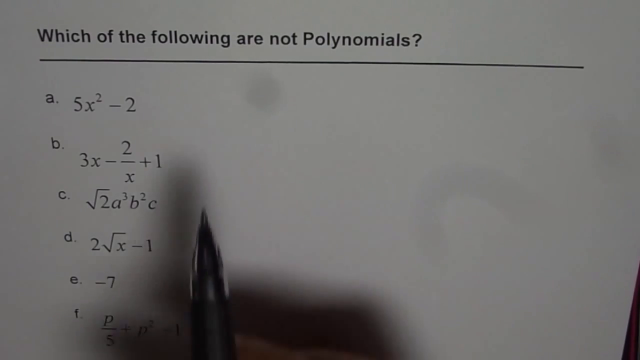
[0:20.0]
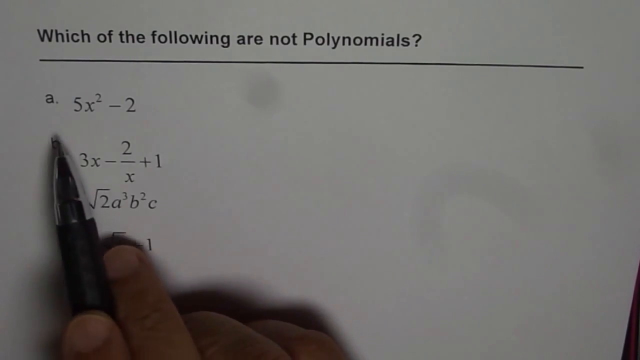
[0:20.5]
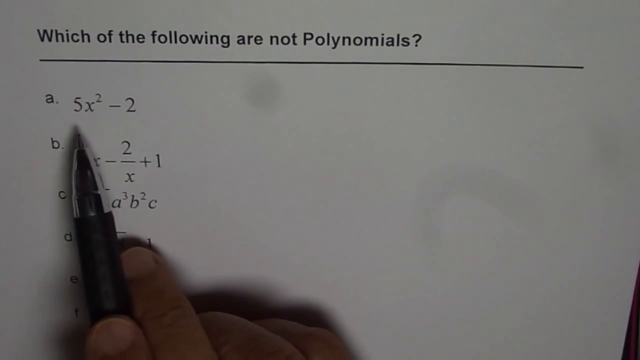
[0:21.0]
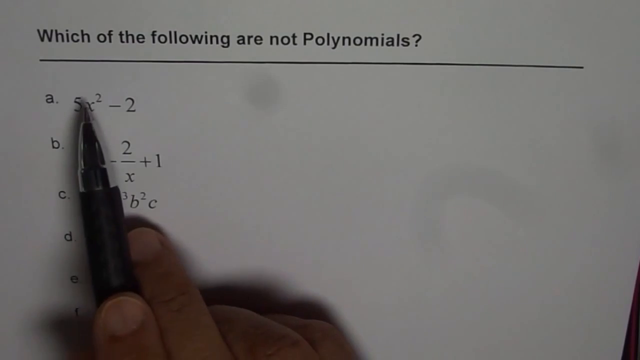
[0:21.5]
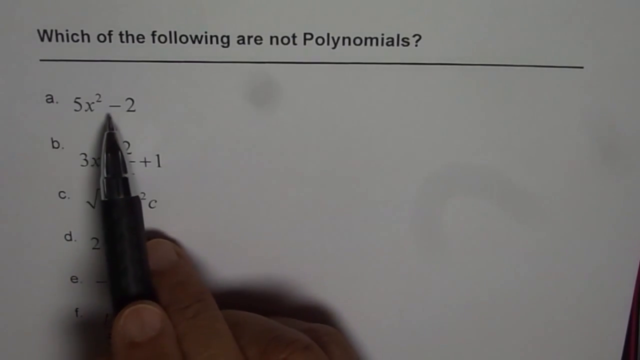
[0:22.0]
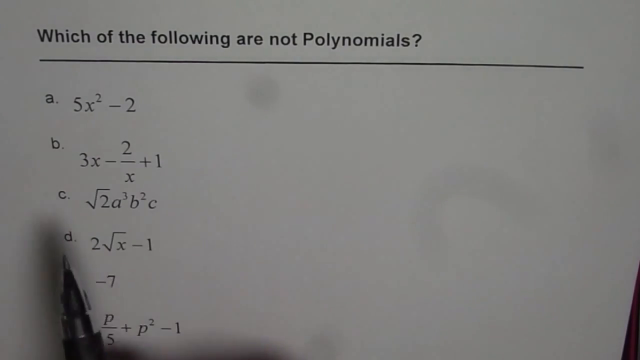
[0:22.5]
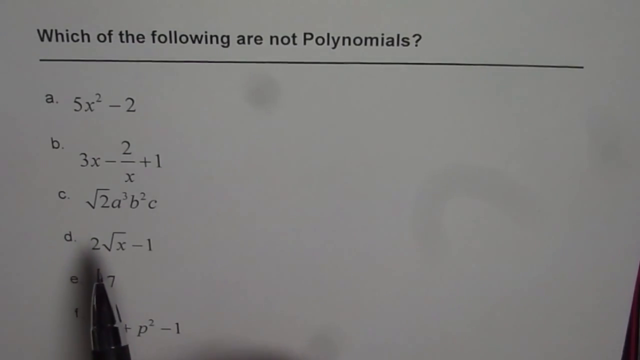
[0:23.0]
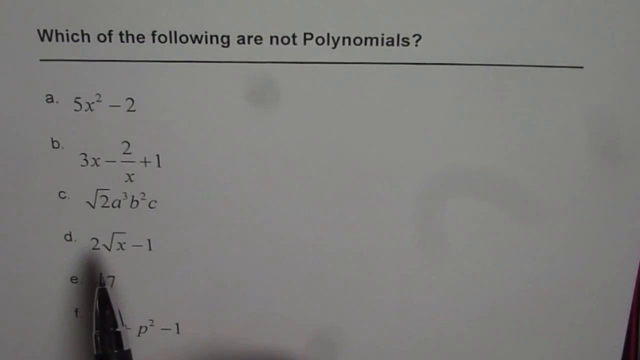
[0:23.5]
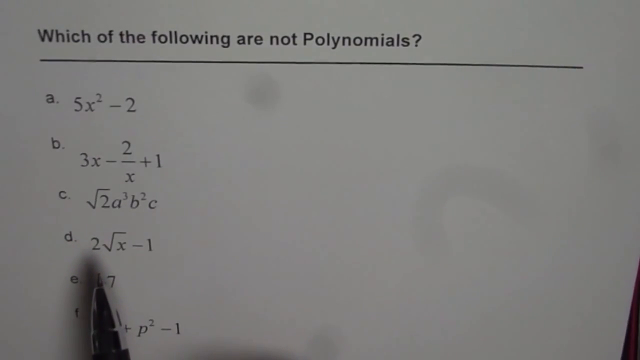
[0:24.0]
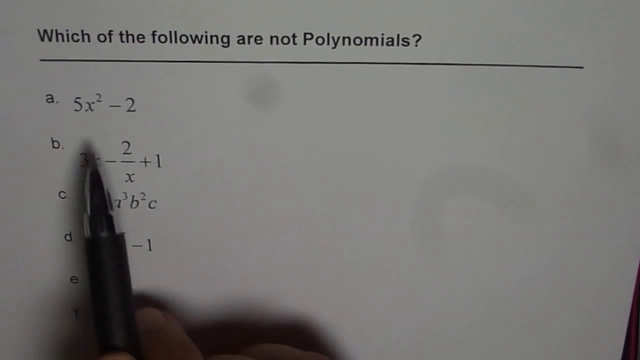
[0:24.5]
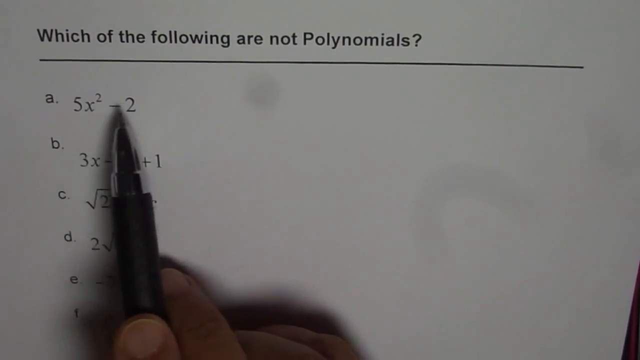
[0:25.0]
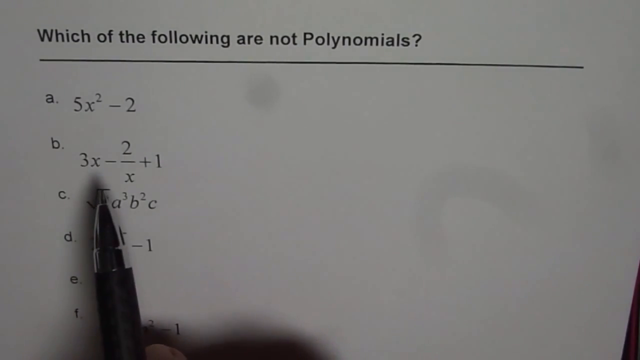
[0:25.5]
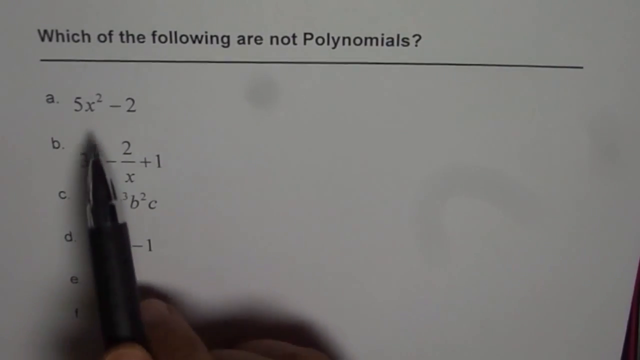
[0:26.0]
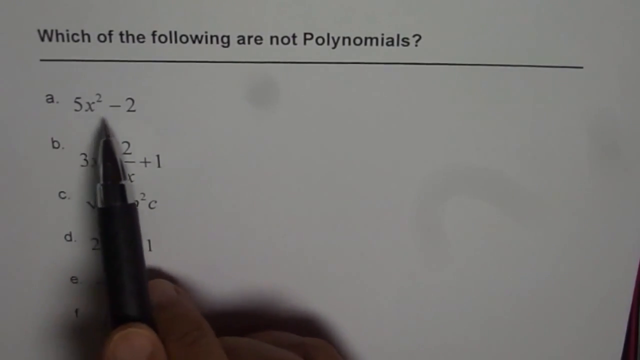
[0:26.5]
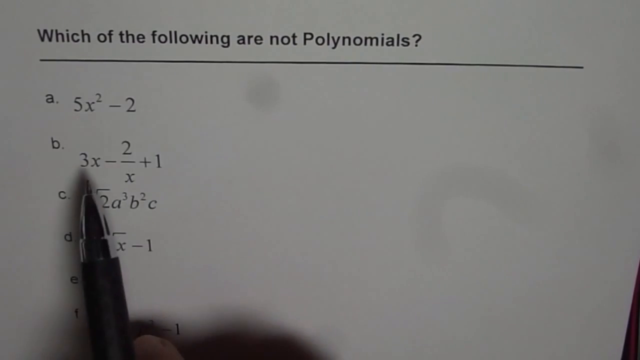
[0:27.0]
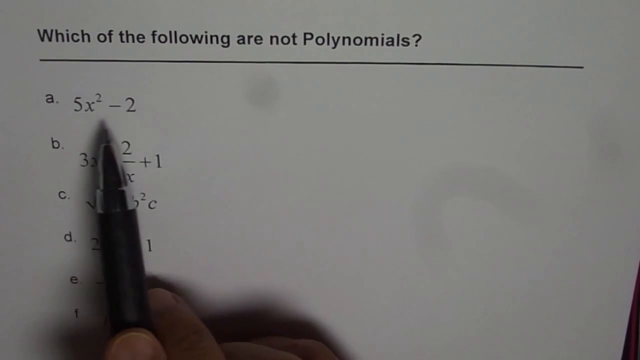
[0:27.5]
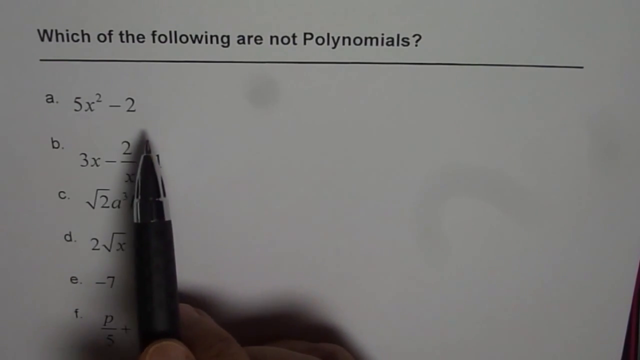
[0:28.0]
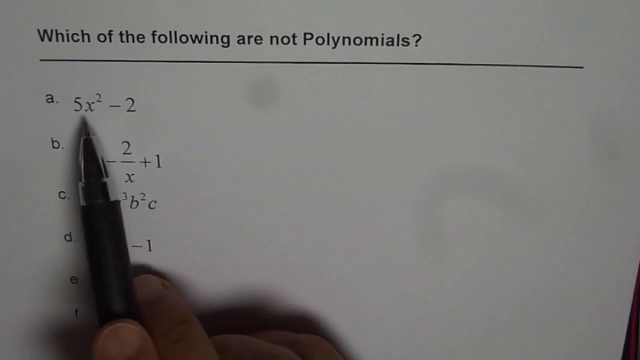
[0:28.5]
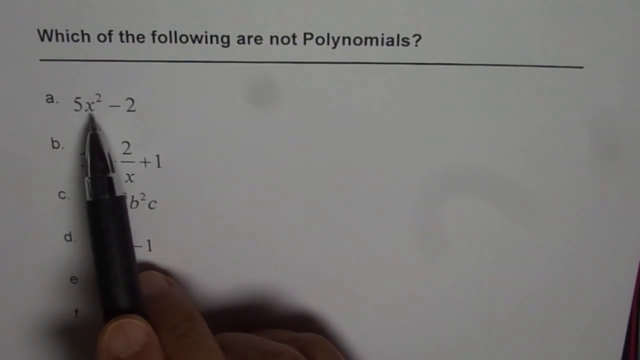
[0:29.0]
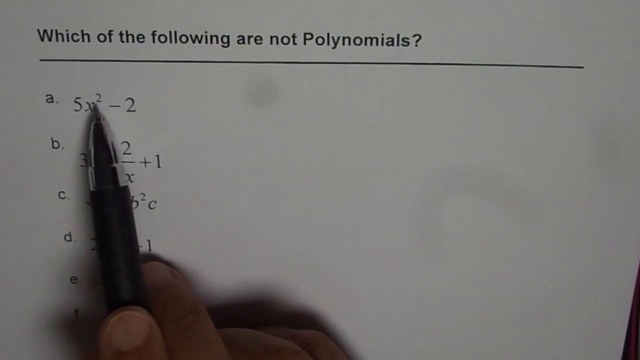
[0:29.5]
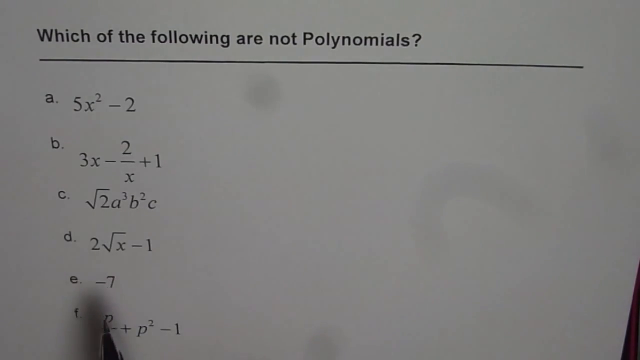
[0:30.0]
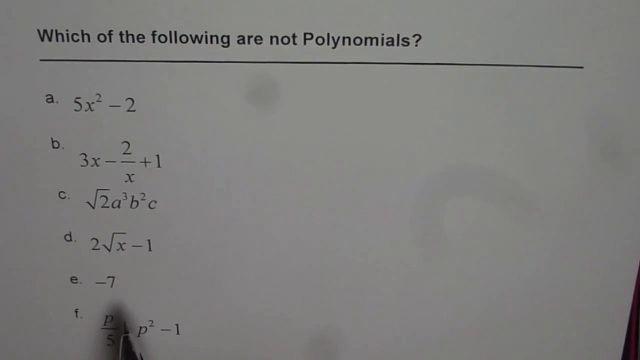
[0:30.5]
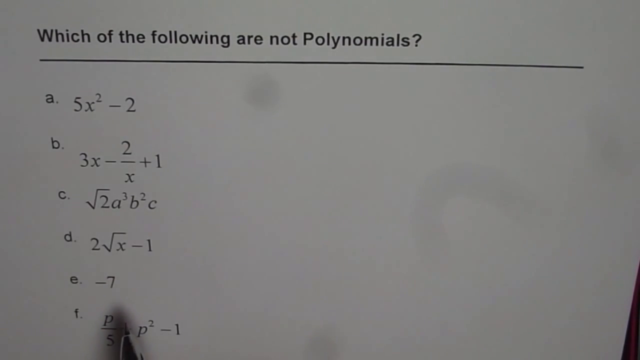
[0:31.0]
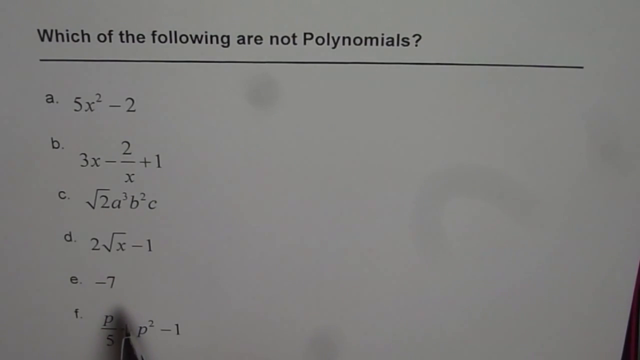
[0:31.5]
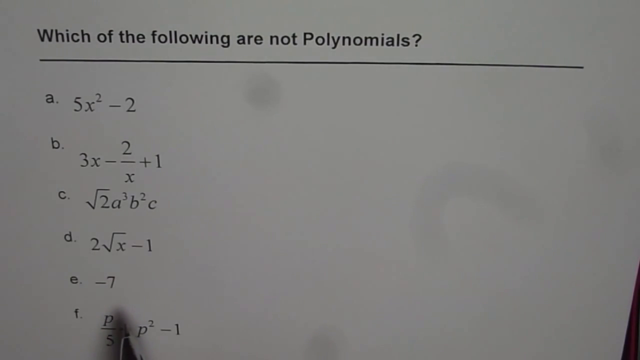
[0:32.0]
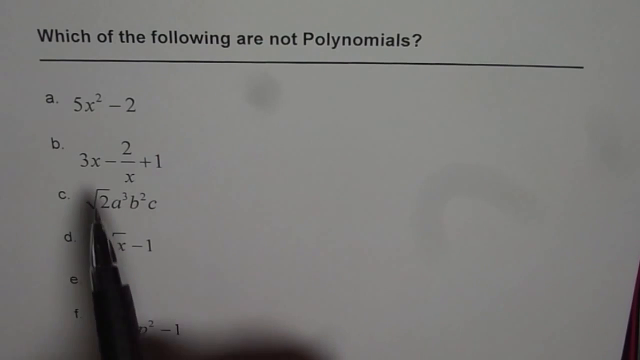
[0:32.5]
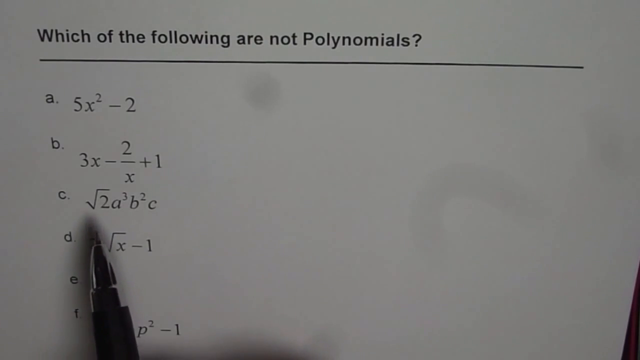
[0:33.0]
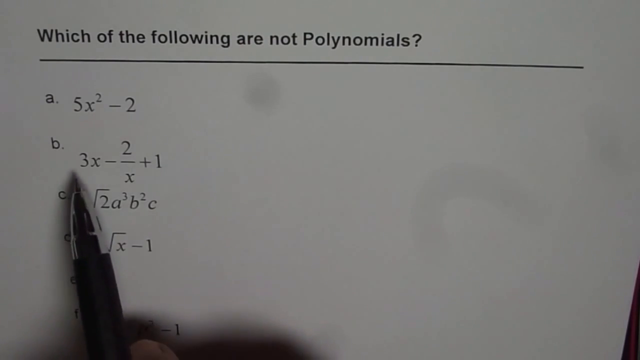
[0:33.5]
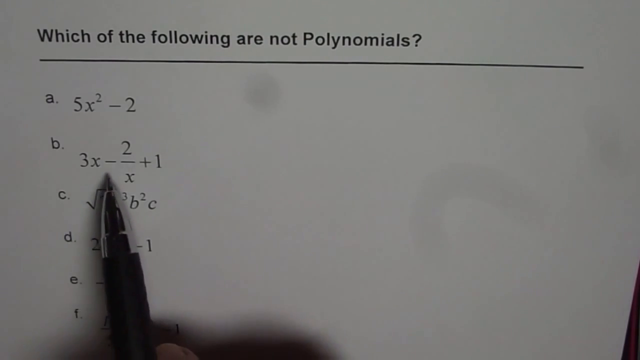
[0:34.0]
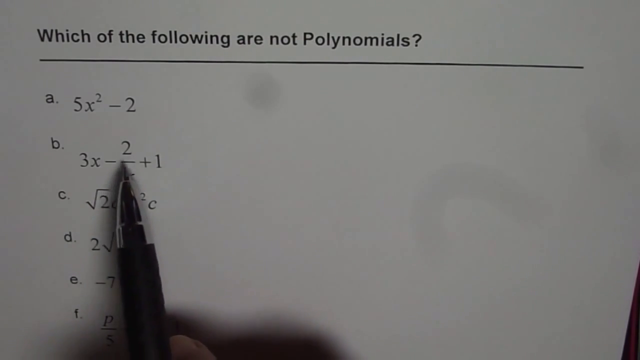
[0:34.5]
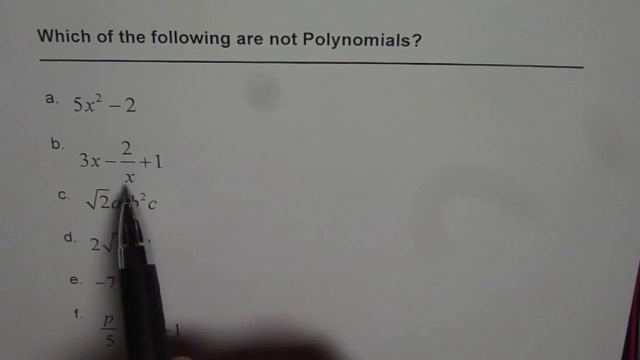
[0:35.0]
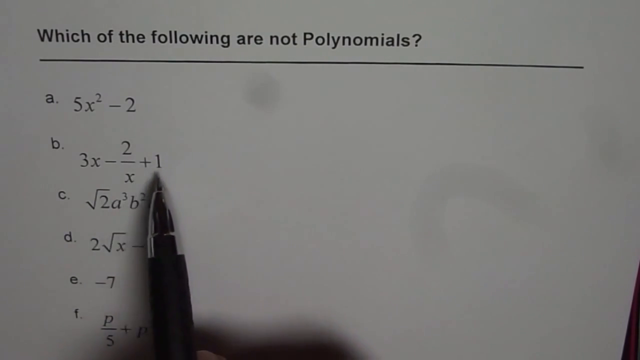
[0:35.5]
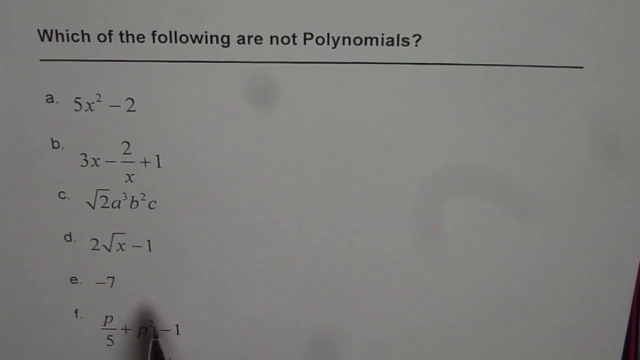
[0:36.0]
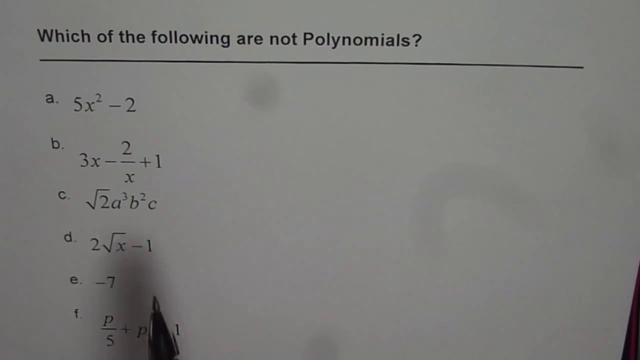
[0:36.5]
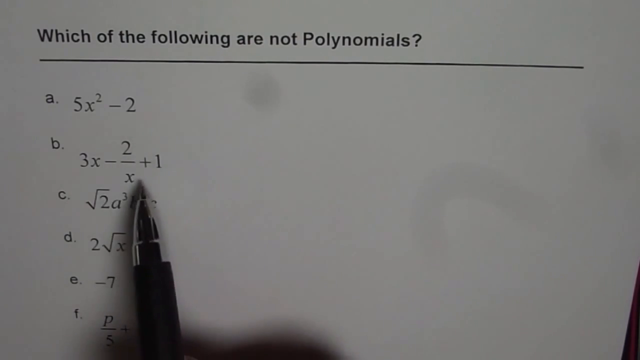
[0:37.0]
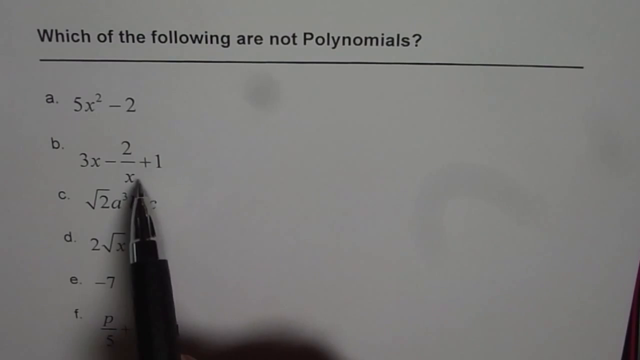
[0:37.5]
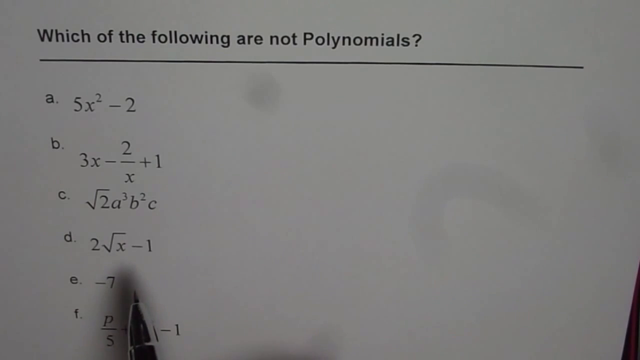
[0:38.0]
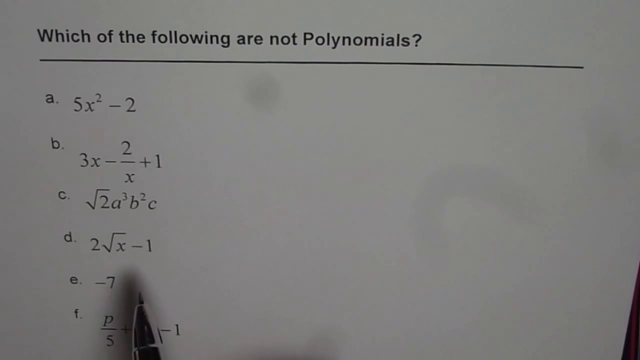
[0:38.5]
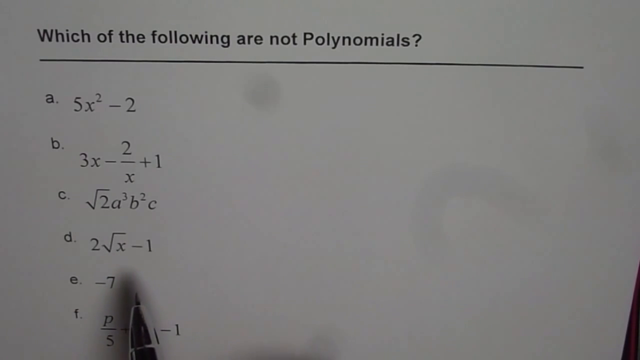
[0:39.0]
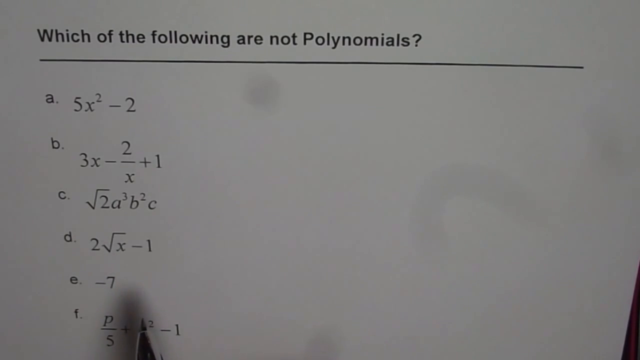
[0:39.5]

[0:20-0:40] A pen comes in from the bottom. It has a silver tip, a silver casing around the tip and a small black grip. It is held in the right hand with the pointer finger on top, the thumb out of view, the middle finger running down the side and the other two fingers folded under. A small shadow falls under the pen and under the knuckles. The pen goes up to A, points at the 5 and then the minus 2, moves down to D and points at the 2, returns to the 5 and the minus 2, then points down at the 3 in B. It goes back up to A, then down to F, pointing at it for a moment, then moves to B and touches every part of that expression: the 3, the x, the 2, the other x and the 1. It then returns to F and points at it again. At the top, the bold black heading "which of the following are not polynomials" sits just in from the left and just down from the top, with a line under it that extends to about an inch from the right side. Just below the center of the line there is a small blotchy spot. In the bottom right corner the paper has a slight fold, running about a quarter of an inch to the left and about an inch up the right side, forming a small triangle.